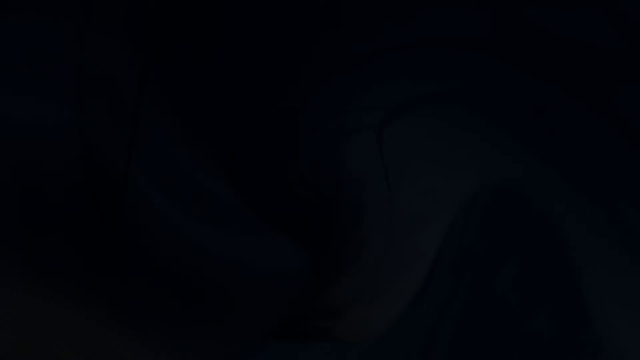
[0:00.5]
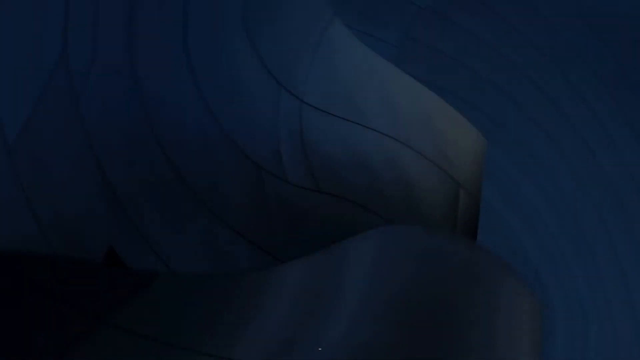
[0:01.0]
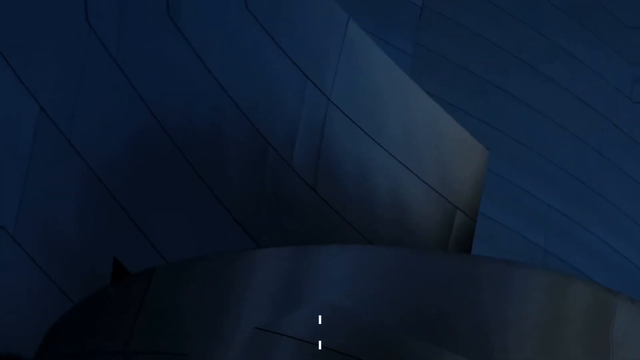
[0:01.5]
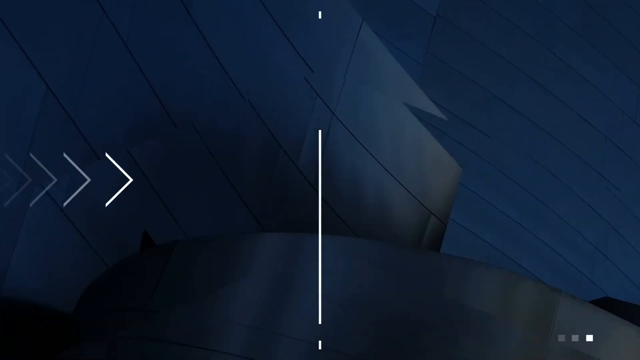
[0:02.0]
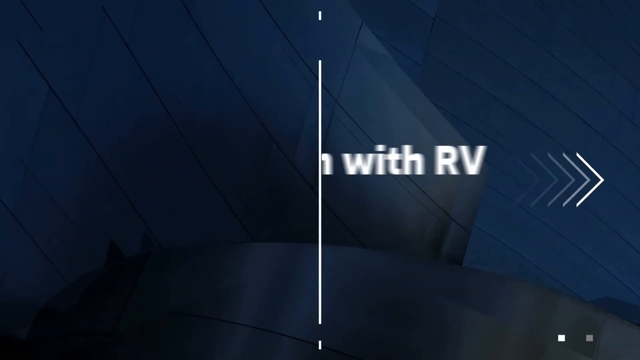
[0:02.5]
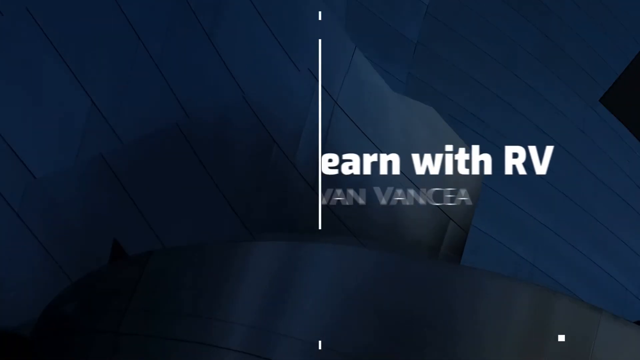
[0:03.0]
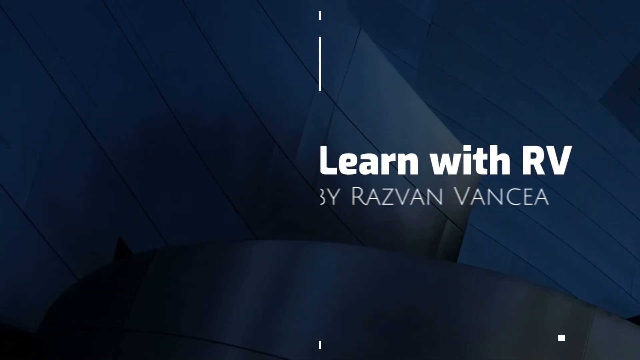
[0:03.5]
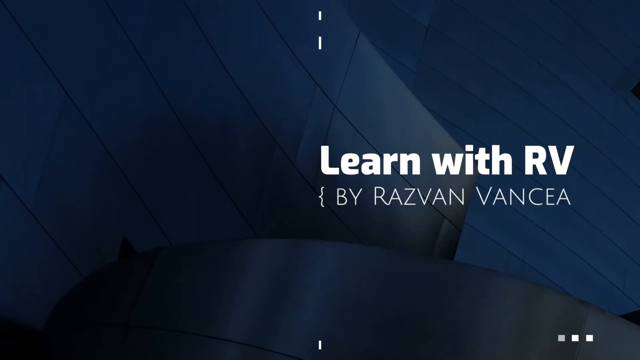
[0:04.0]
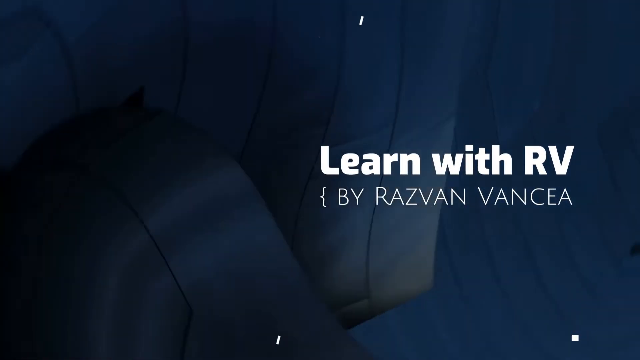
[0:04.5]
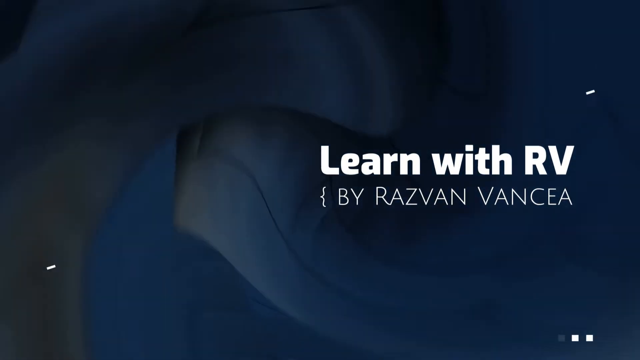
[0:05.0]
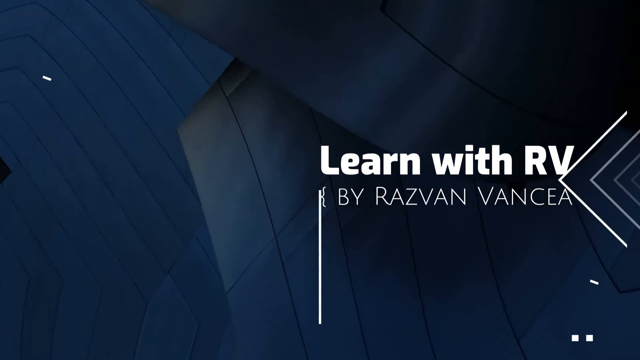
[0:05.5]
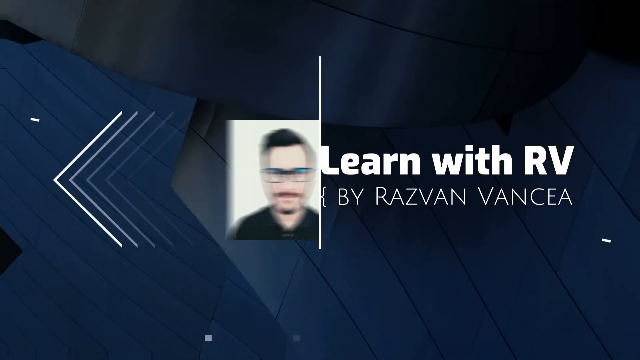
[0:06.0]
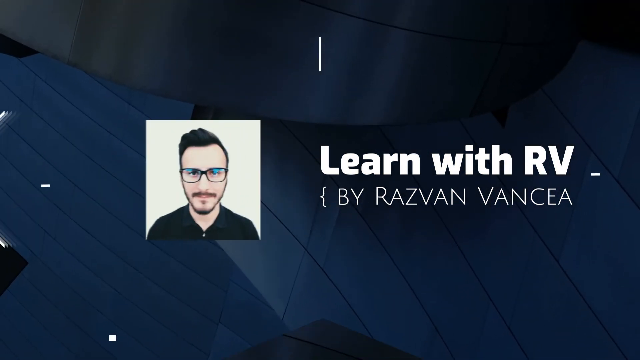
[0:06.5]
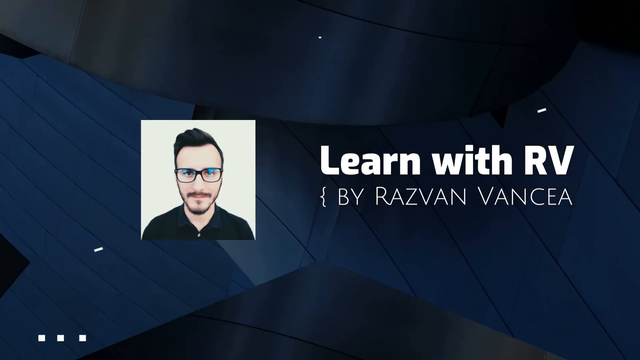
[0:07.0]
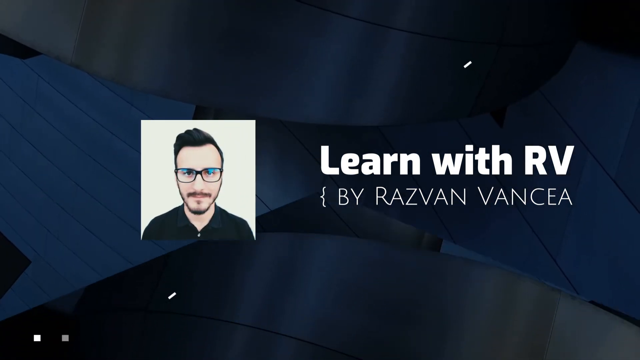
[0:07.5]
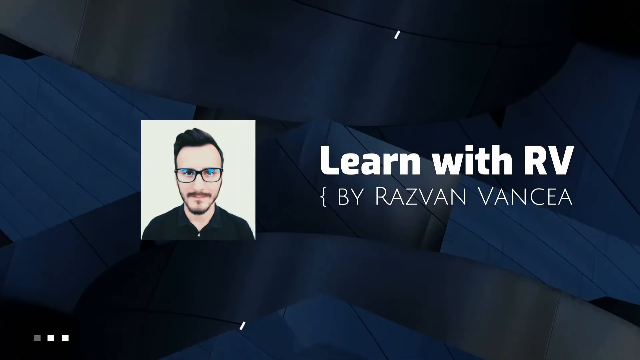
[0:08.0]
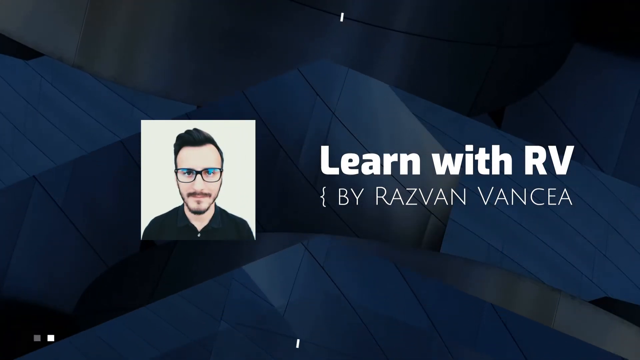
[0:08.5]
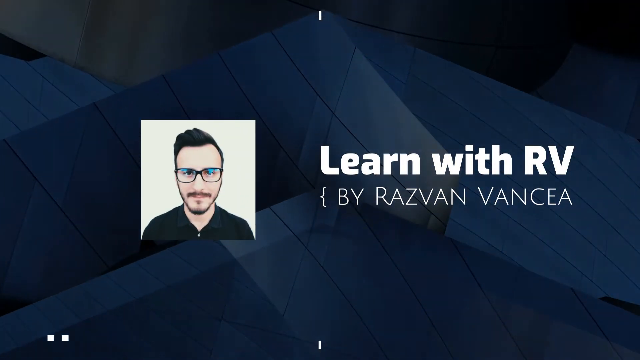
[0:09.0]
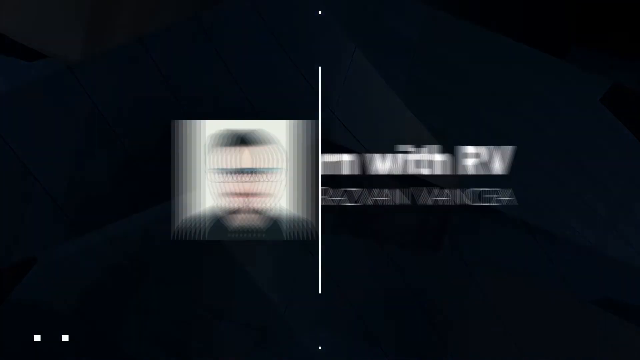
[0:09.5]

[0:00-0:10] The video, Learn with RV by Razvan Vancea, opens on a blue background with white lettering. A photograph of the author follows: he looks to be a young man wearing glasses, with trimmed black hair and a trimmed black beard, and a black shirt. The background is highly stylized and moves a lot, almost like a sail moving, with a lot of spinning and motion. White arrows and white lines rotate around the image.